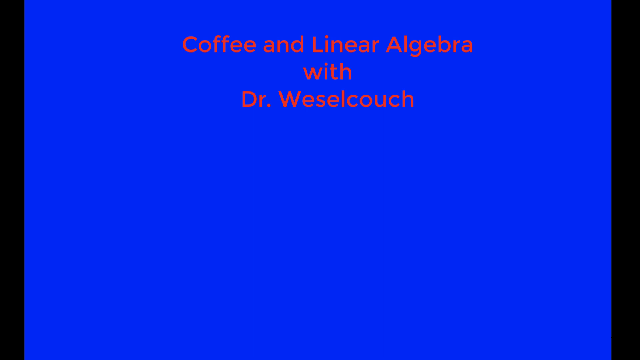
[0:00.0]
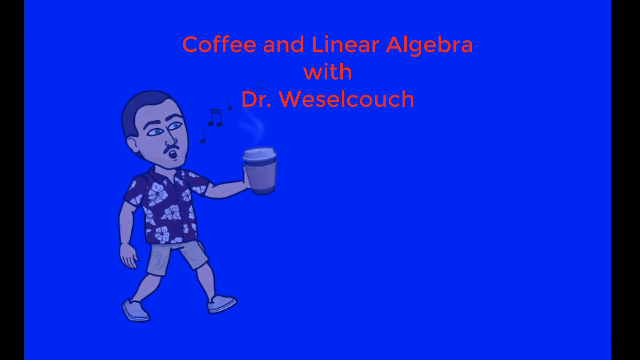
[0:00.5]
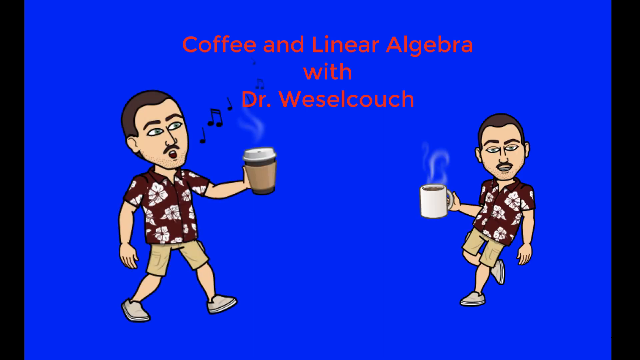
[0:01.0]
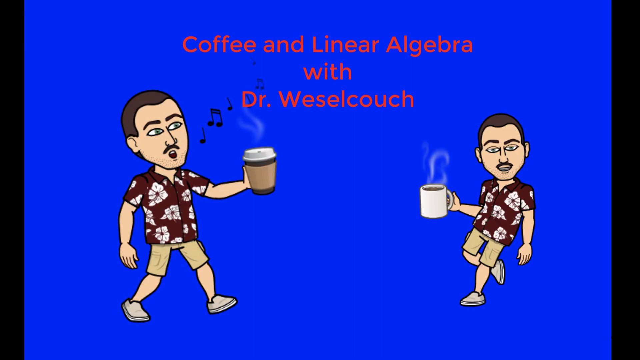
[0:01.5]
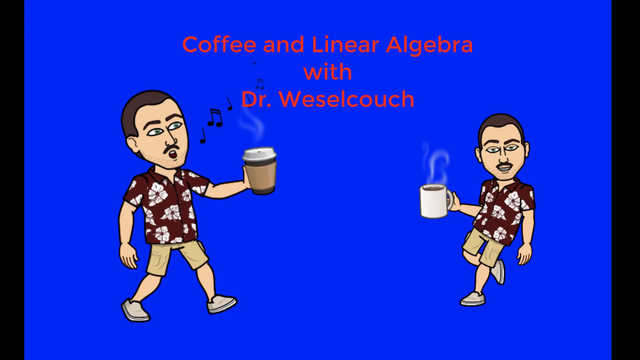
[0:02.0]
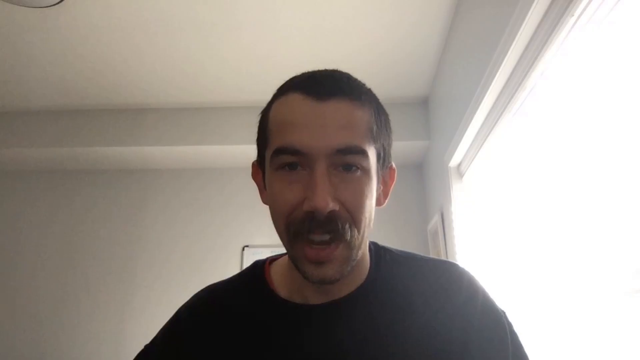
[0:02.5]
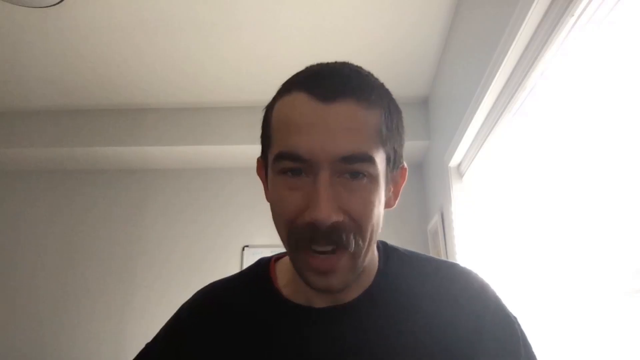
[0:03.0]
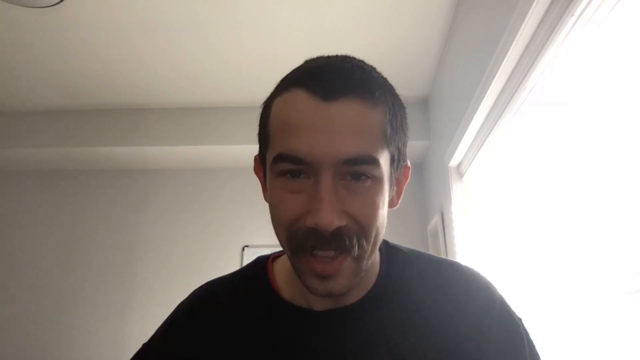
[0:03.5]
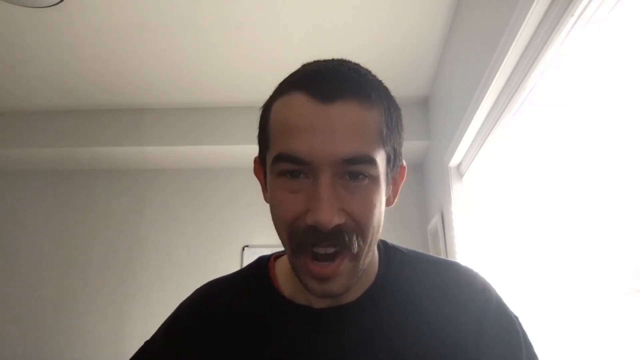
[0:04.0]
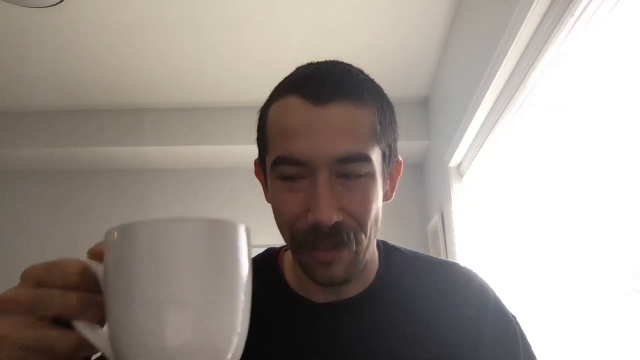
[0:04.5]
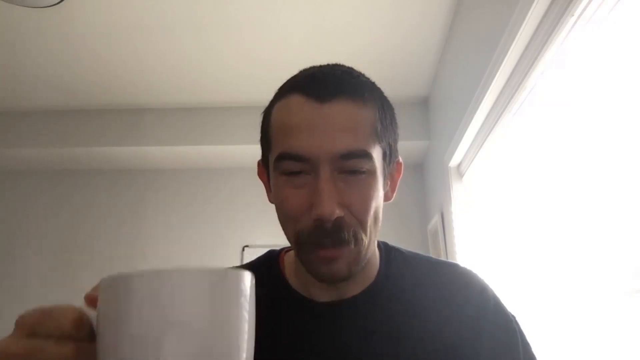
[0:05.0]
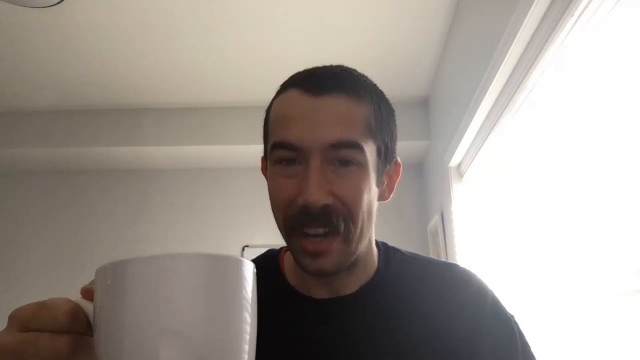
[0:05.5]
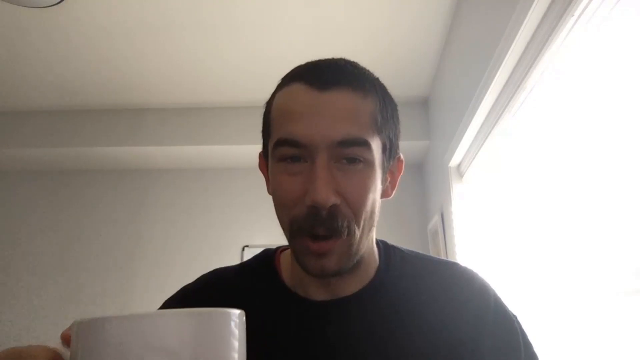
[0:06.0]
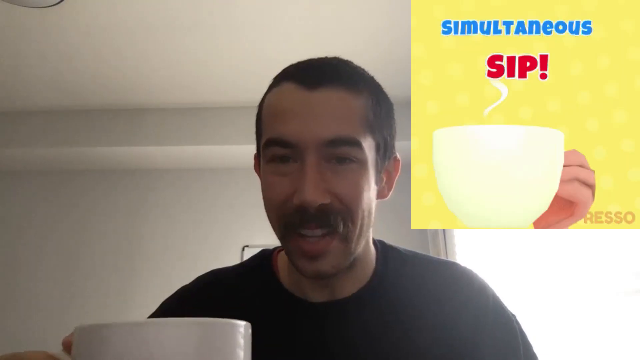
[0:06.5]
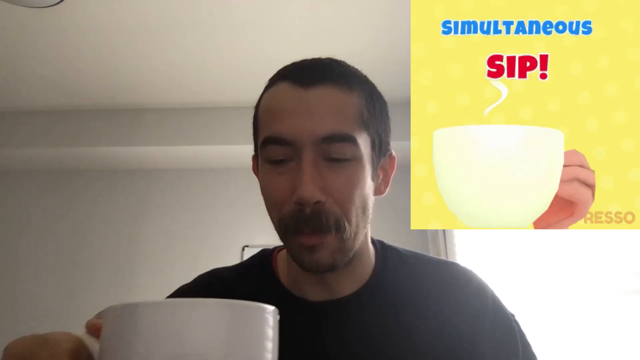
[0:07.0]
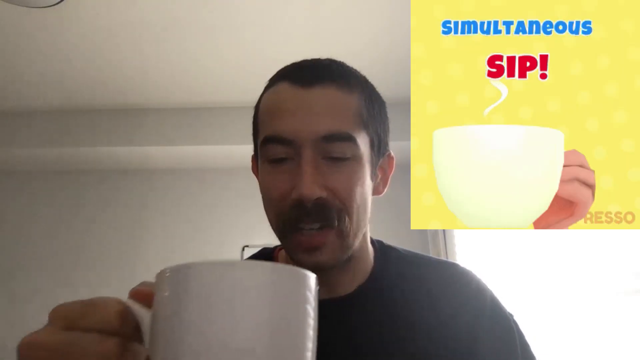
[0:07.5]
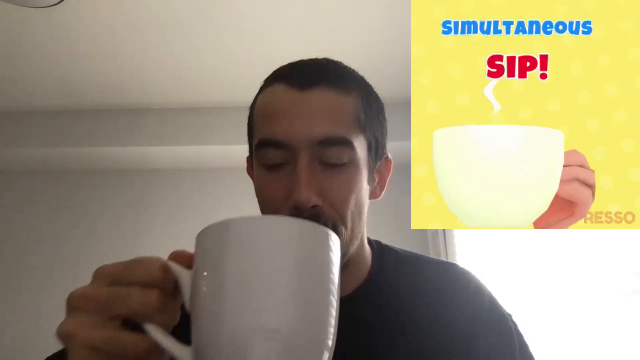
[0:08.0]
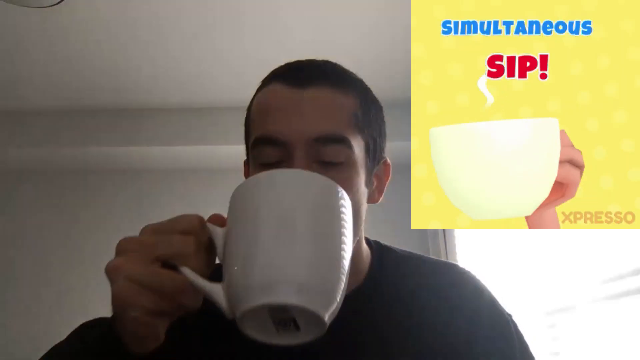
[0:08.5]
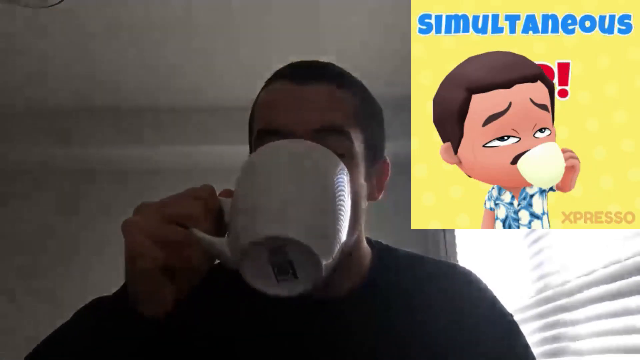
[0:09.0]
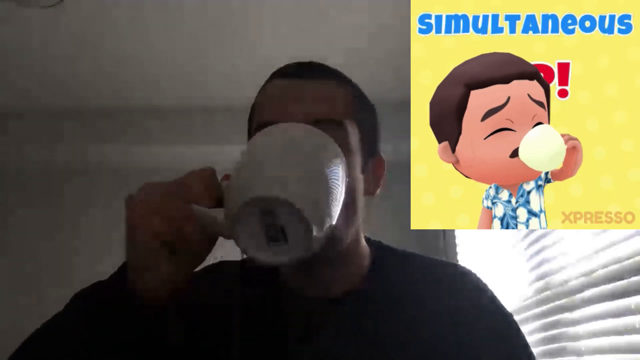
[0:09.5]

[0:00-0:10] An intro sequence shows a blue screen with red text reading "coffee in linear algebra with Dr. Wessel Couch." Cartoon caricatures of him appear on the left and right, both carrying coffee: the left one holds something like a Starbucks-type coffee, and the right one holds coffee in a mug. Then the man himself is shown taking a sip of coffee, with a small graphic at the top right reading "simultaneous sip."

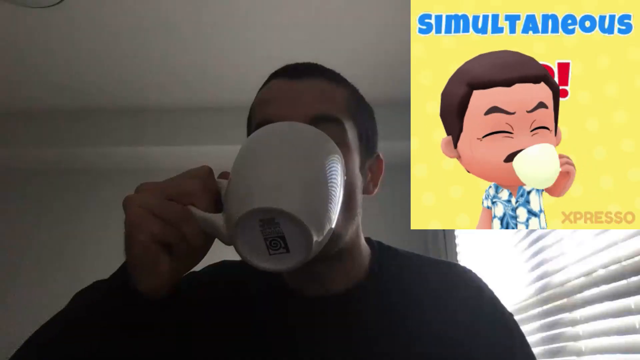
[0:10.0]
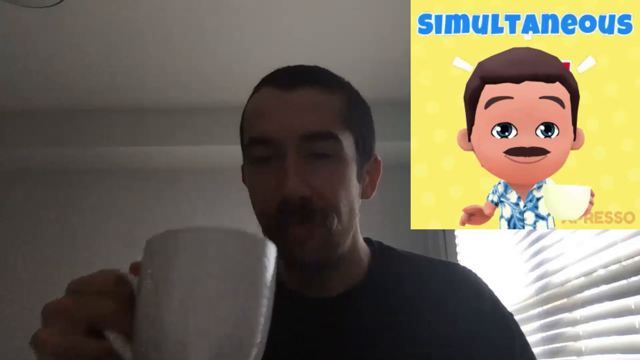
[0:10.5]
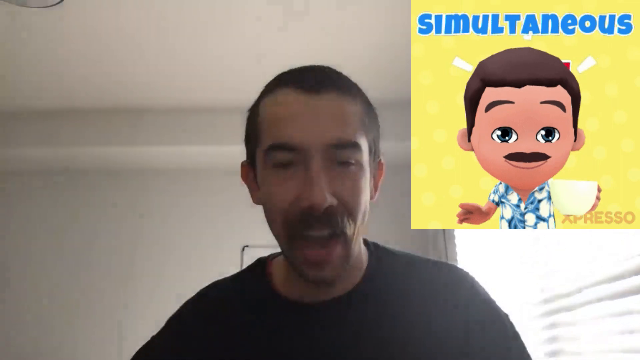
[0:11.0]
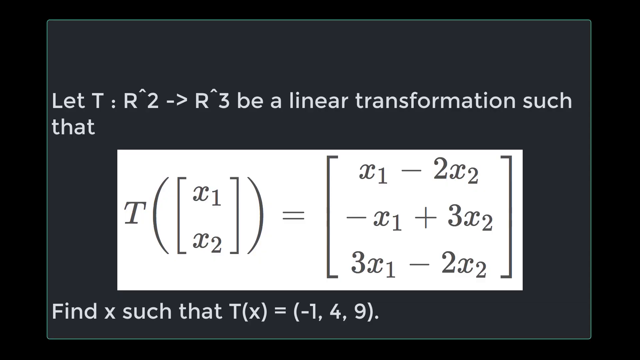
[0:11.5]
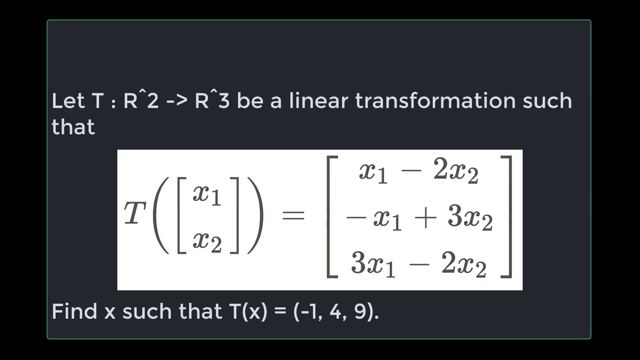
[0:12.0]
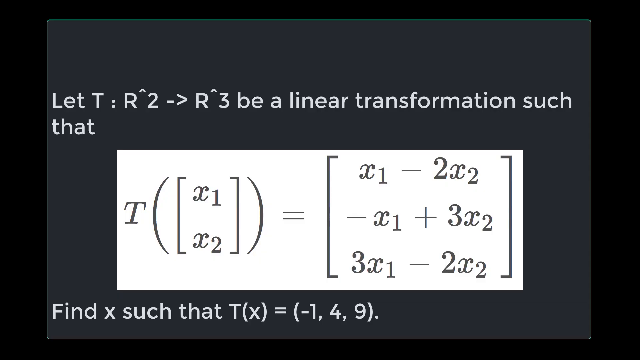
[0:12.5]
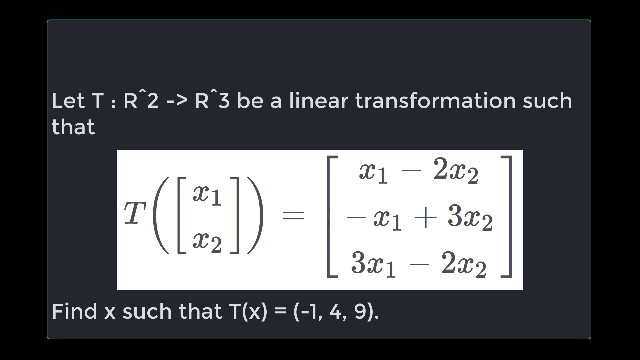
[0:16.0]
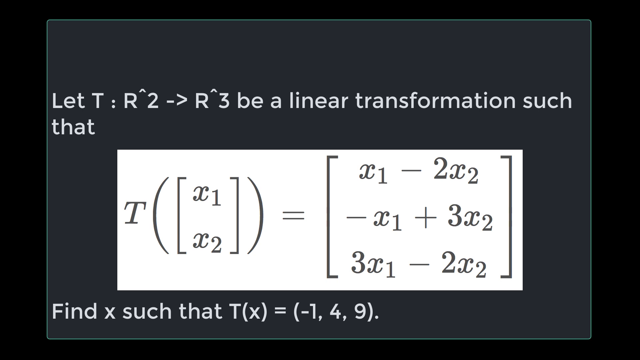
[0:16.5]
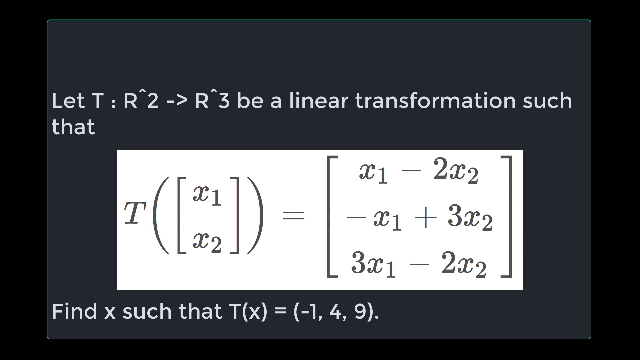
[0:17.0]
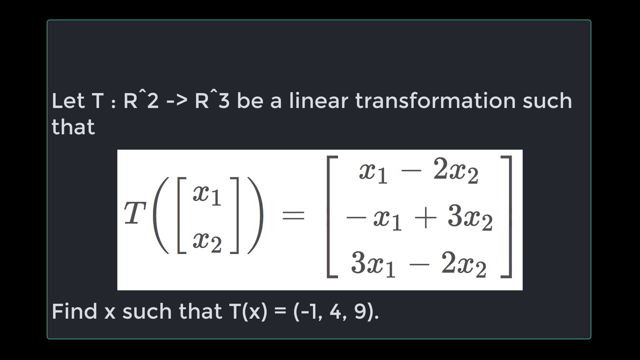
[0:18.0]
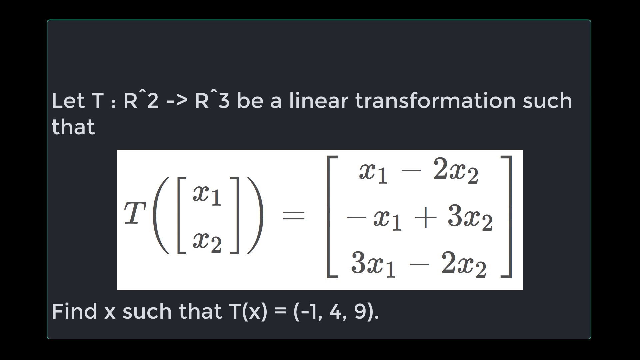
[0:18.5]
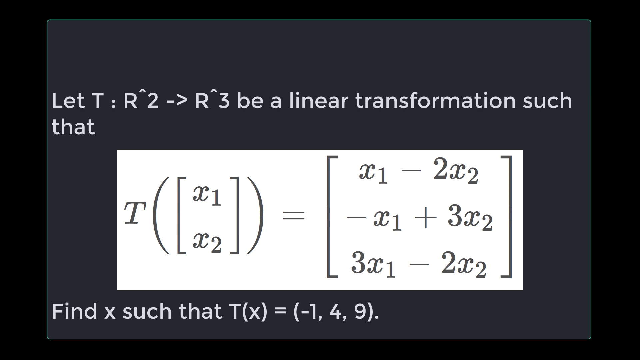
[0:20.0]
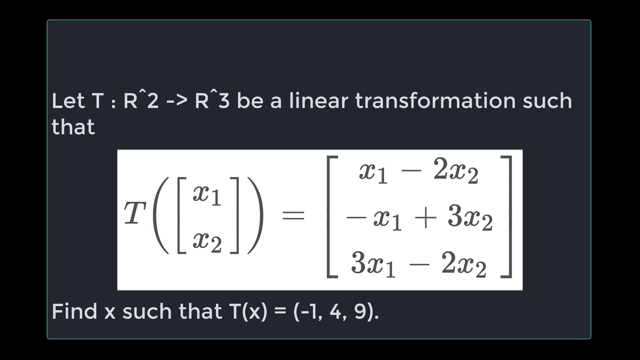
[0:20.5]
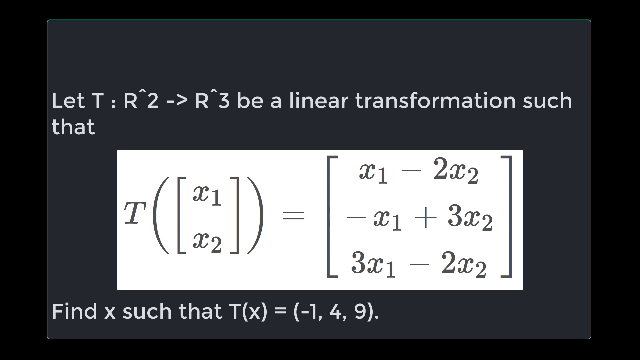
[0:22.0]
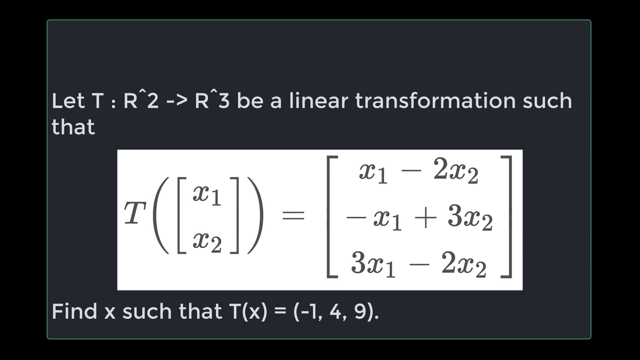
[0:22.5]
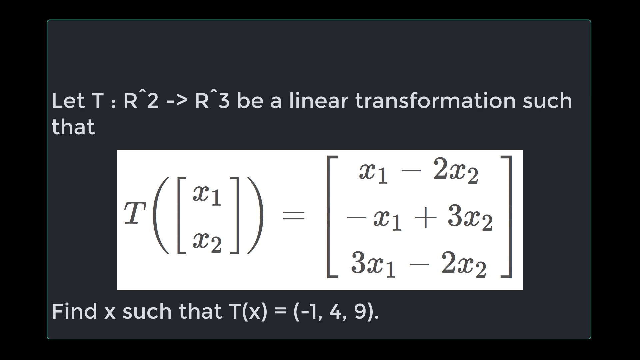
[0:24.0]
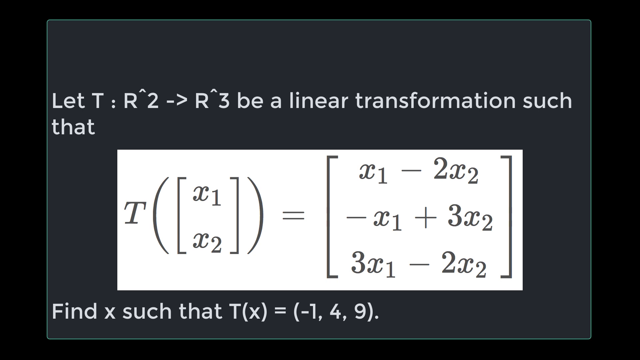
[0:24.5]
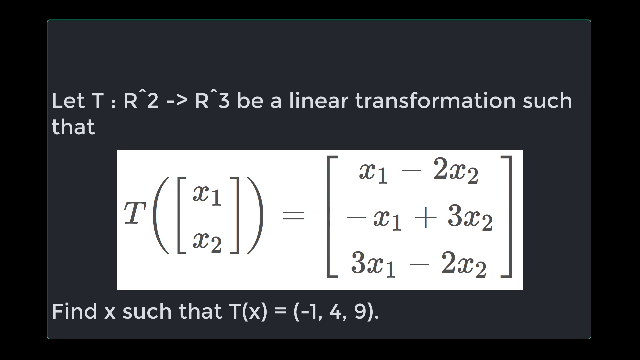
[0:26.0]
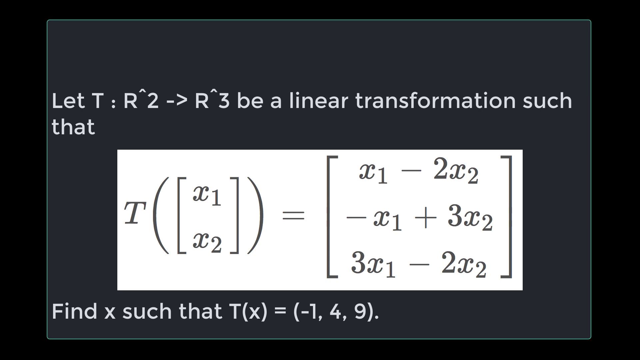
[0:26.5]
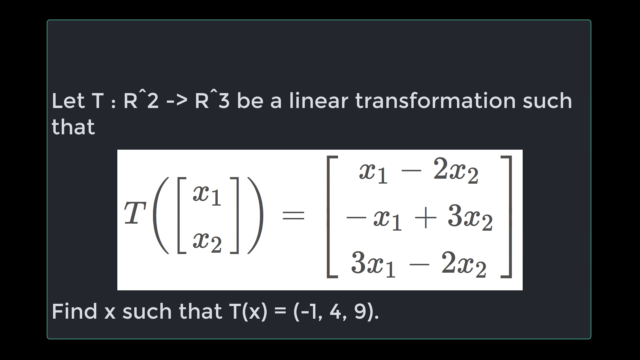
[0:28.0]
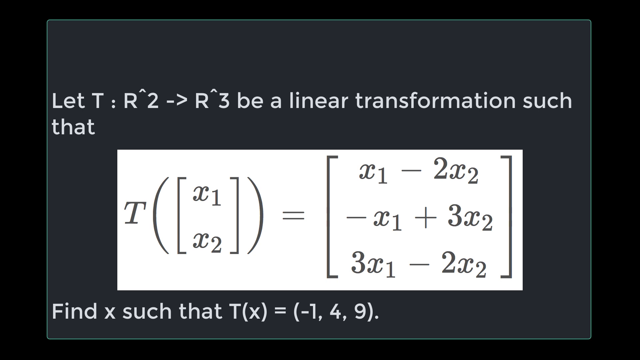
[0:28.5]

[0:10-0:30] The man continues taking a sip of coffee, and the character at the top right also takes a sip. The character looks very similar to the man, with the same type of hair and mustache. Then a screenshot of a problem appears, apparently one he is about to solve. It reads "let T" with R to the second power and R to the third power, "be a linear transformation such that" T of (x1 over x2) equals (x1 minus 2x2, negative x1 plus 3x2, 3x1 minus 2x2), and then "find x such that Tx equals negative 149." He does not work on the problem yet.